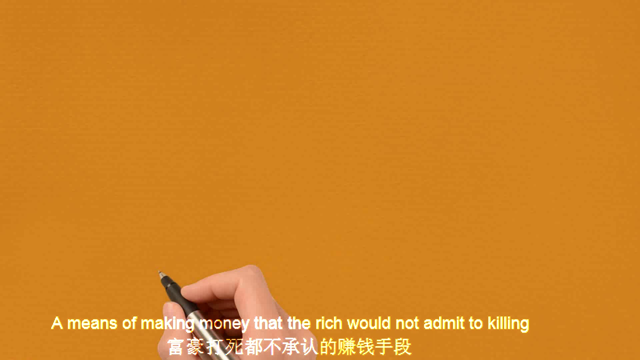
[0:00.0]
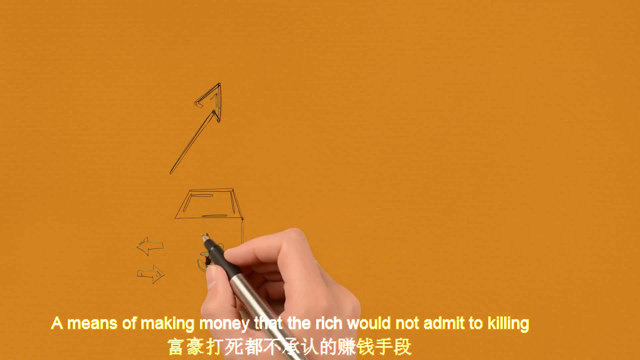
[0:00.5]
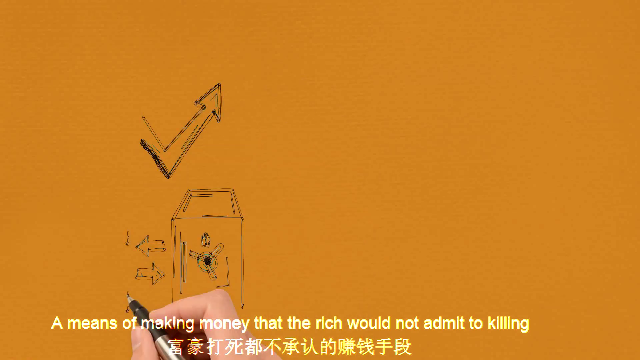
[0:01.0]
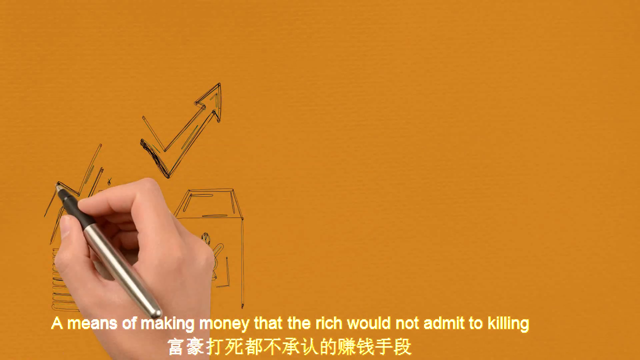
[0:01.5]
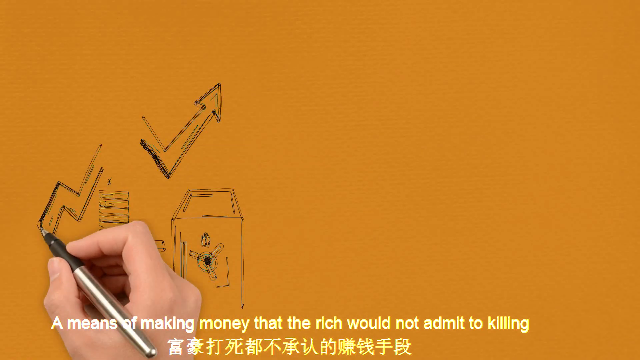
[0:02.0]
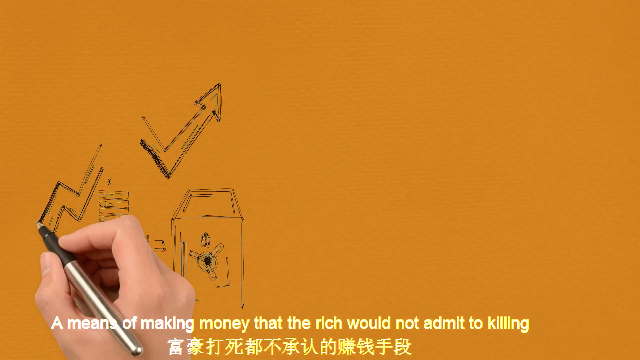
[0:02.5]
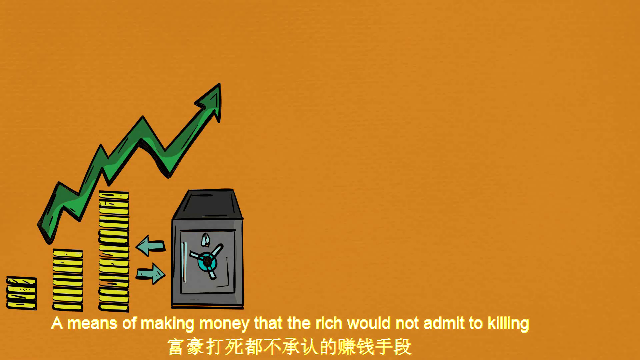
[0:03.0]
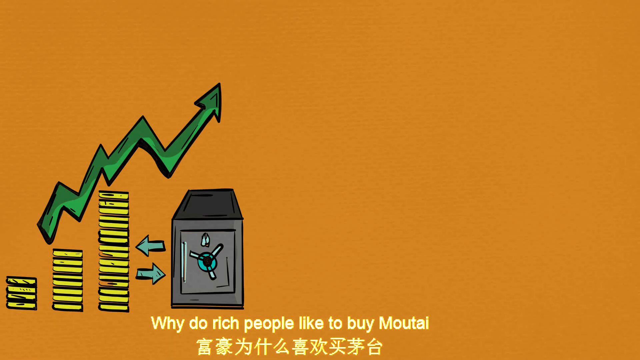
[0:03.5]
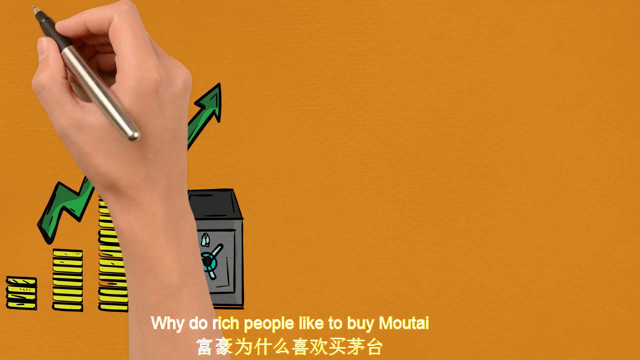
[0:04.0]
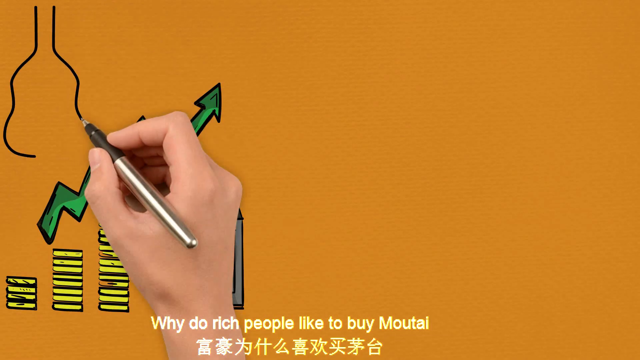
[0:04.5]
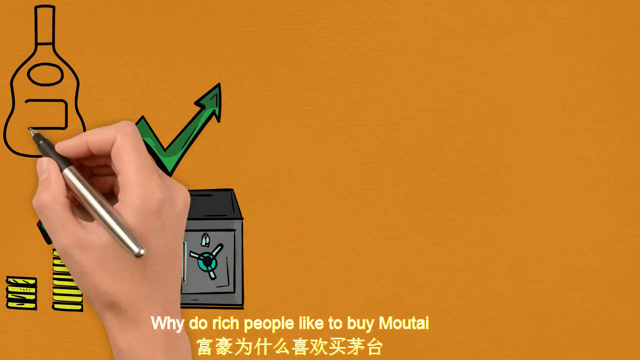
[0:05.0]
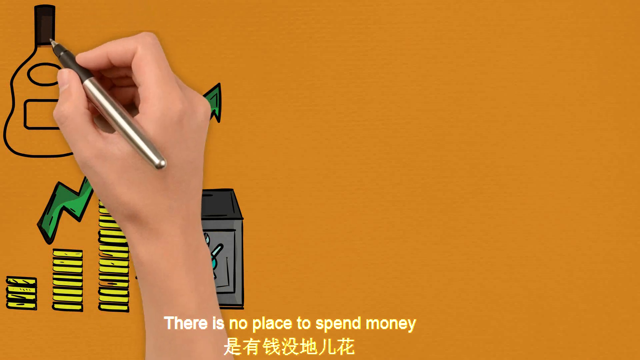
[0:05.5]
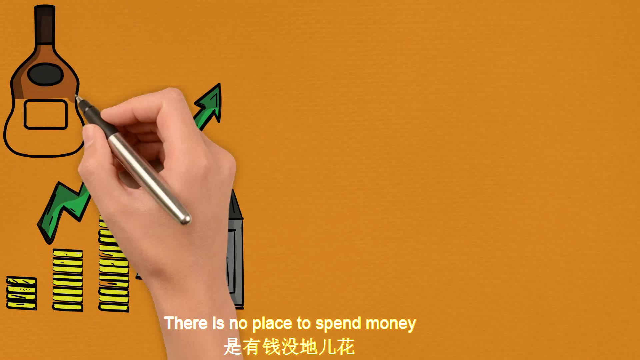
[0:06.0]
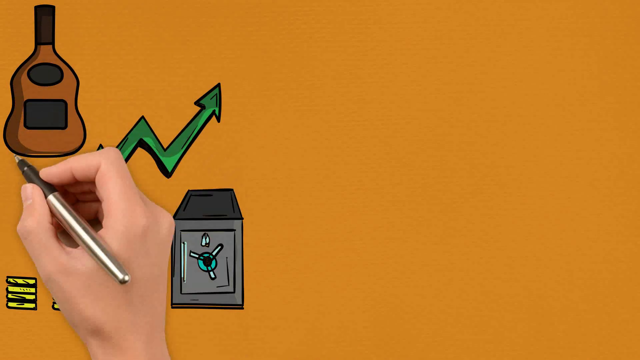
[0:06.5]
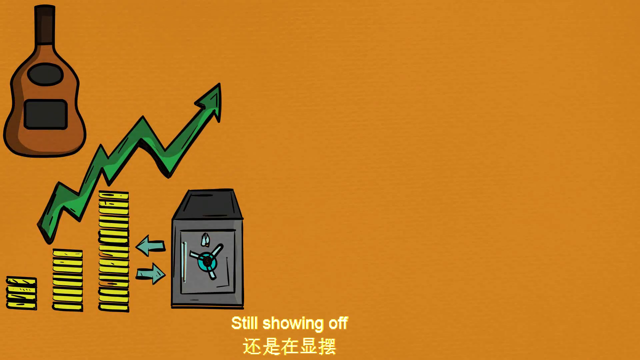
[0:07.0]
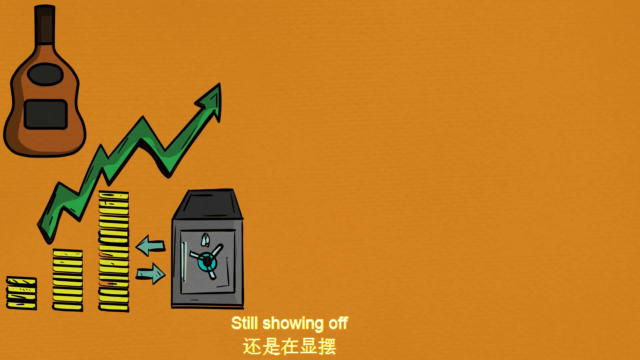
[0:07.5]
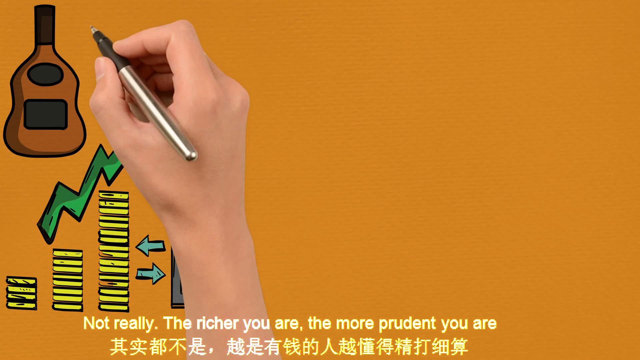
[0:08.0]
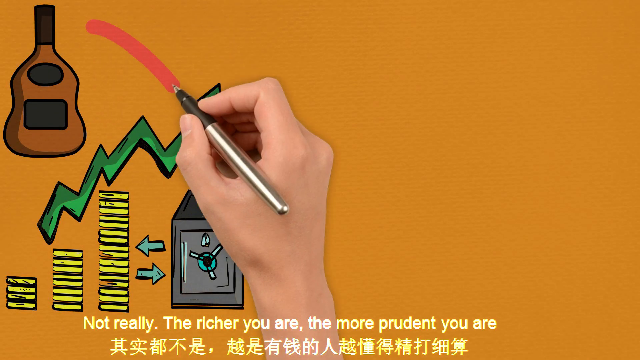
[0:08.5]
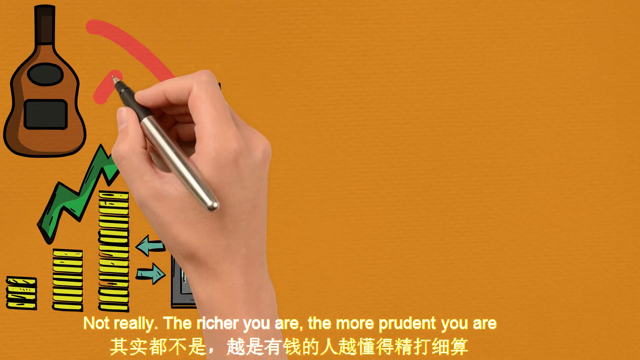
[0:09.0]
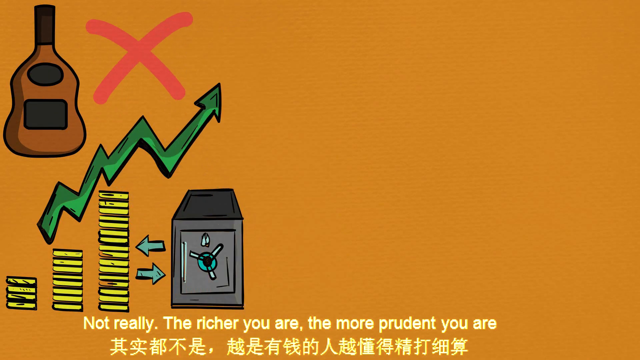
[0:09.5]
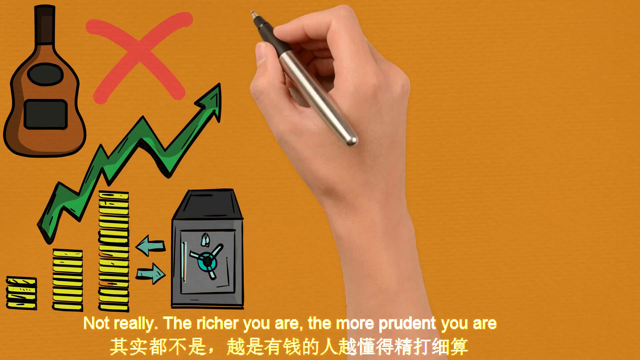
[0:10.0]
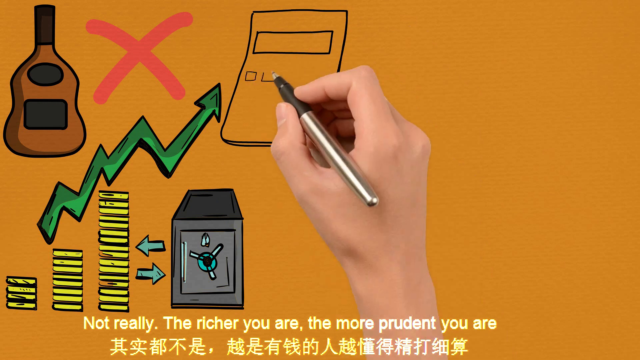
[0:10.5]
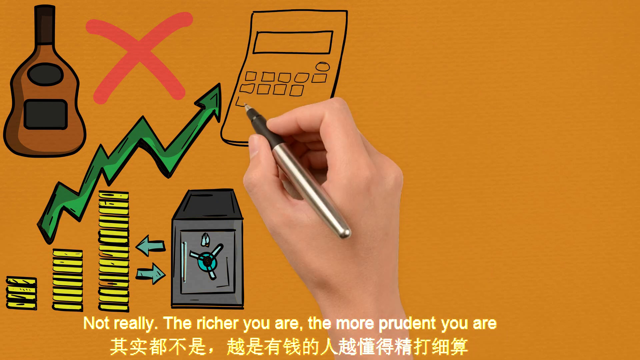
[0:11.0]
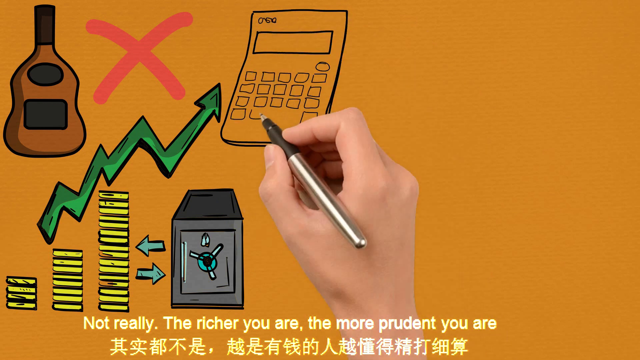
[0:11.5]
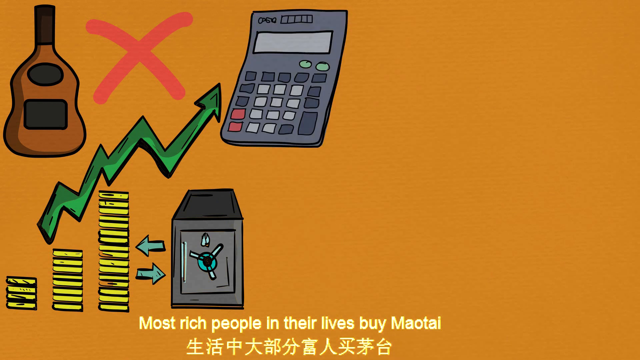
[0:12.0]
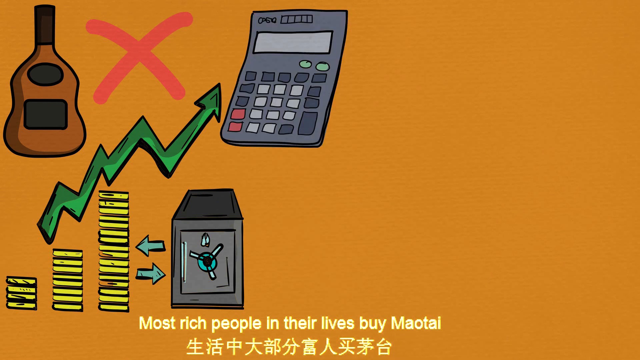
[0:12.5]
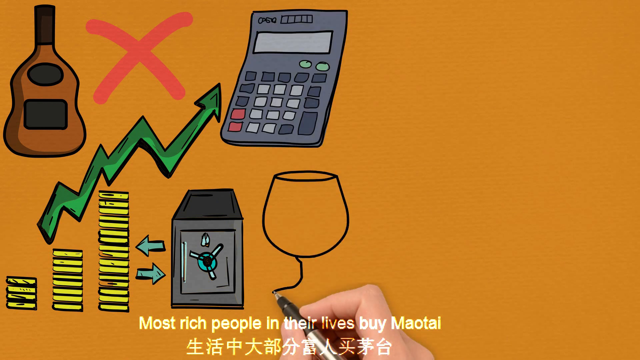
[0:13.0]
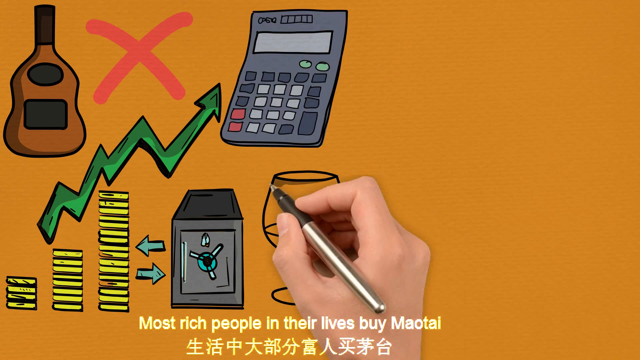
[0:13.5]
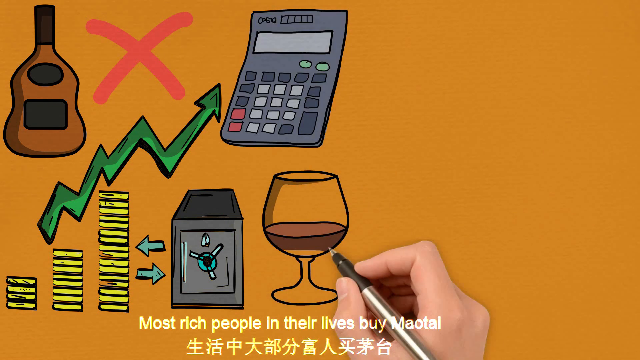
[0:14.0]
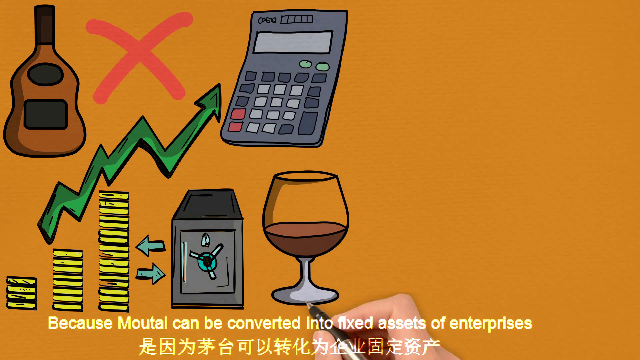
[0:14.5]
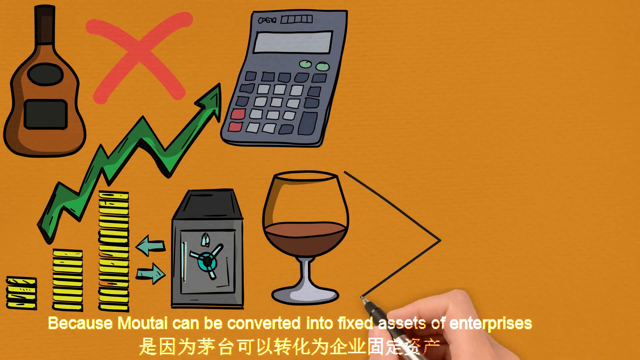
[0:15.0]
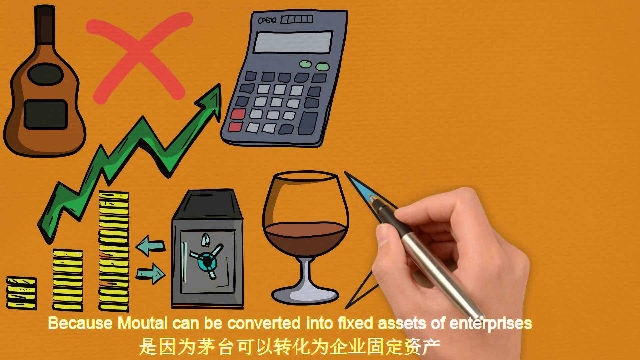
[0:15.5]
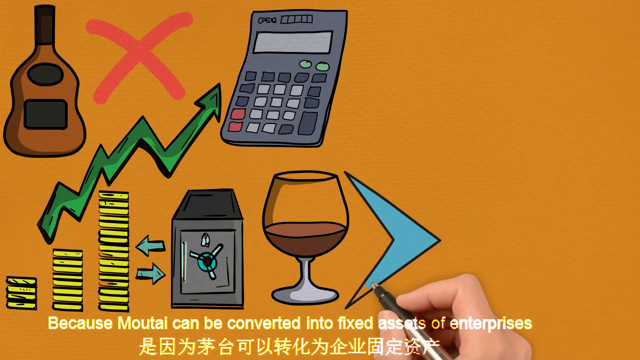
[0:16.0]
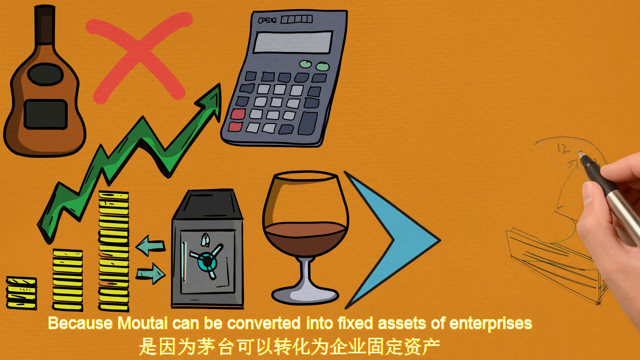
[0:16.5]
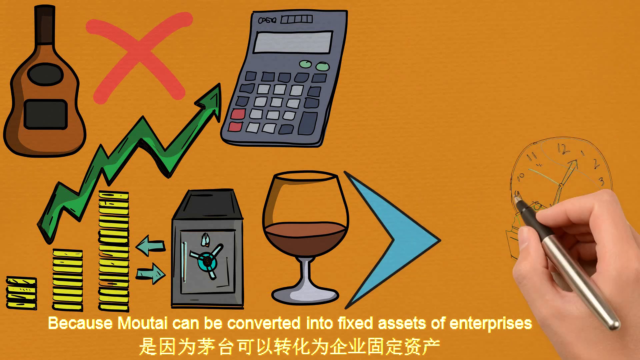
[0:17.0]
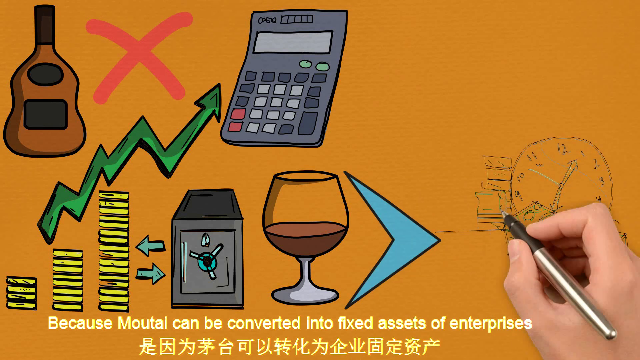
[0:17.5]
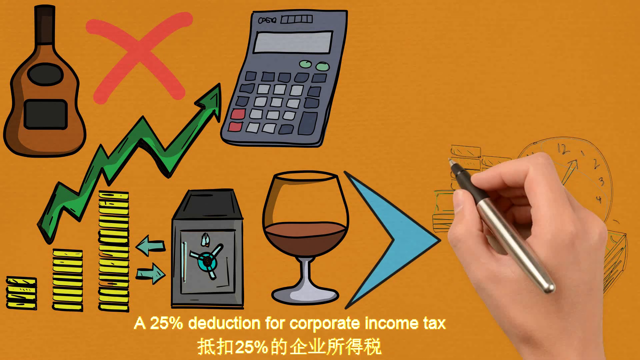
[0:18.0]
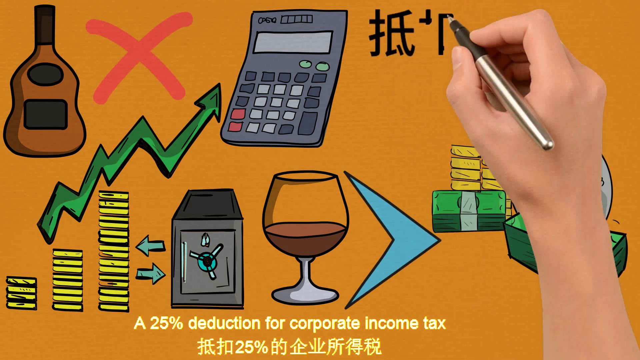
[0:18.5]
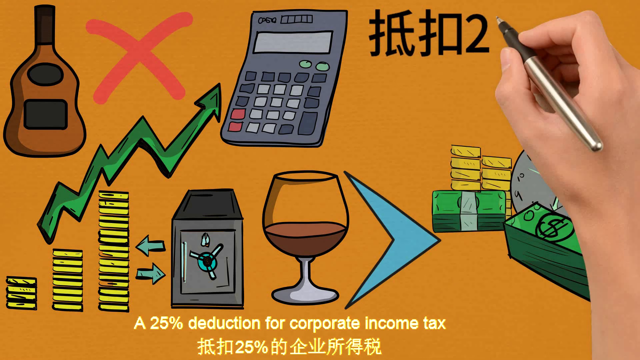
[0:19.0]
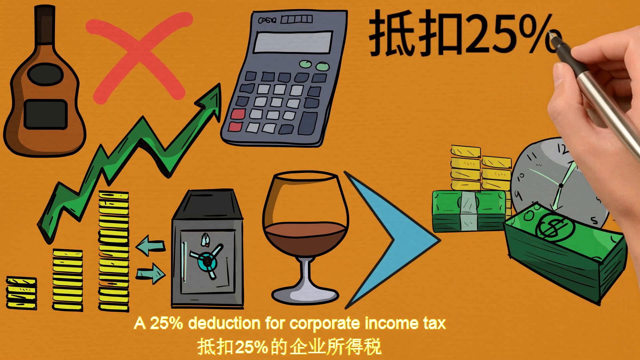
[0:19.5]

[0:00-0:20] A hand holds some kind of marker against a screen, with white text at the bottom that reads "A means of making money that the rich would not admit to killing." The hand draws images on the orange paper on the screen, apparently some kind of safe and an arrow. The arrow is shown going up, and the safe is shown pointing to the left and to the right. There appear to be some gold bars on the left side too. The hand draws everything that the text describes. The text at the bottom then reads "Why do rich people like to buy Mu Tai? There's no place to spend money. Still showing off." The hand draws what looks like a bottle, then an X, then a calculator, then a glass of wine and an arrow pointing to the right. The text reads "because Mu Tai can be converted into fixed assets of enterprise." A clock appears, and the hand draws some stacks of money and some gold. It is simply a hand with a marker drawing a story, illustrating everything written at the bottom of the screen.